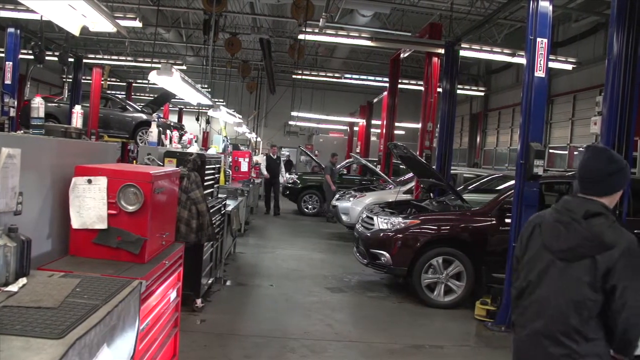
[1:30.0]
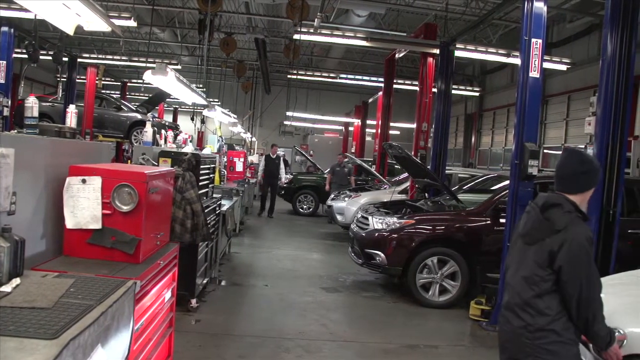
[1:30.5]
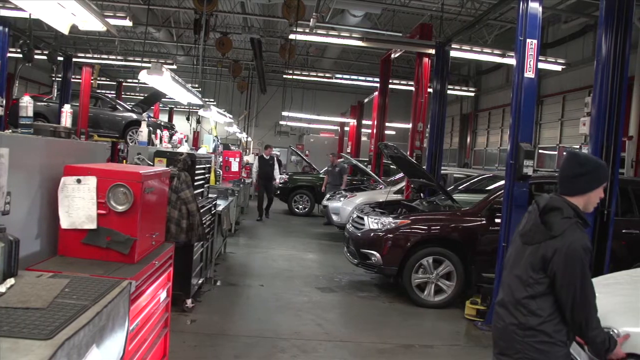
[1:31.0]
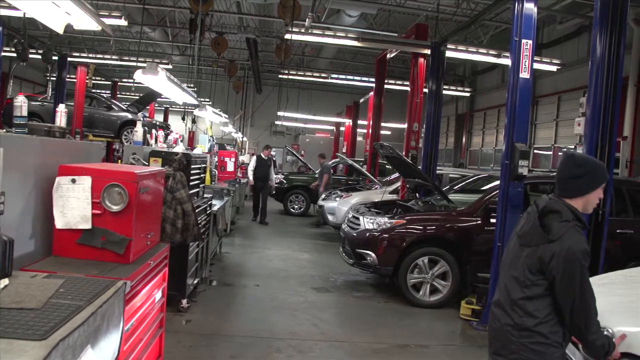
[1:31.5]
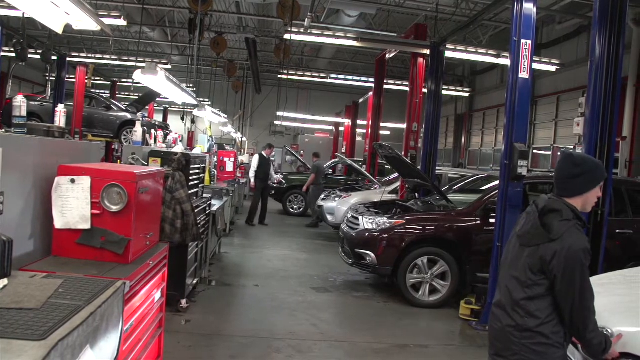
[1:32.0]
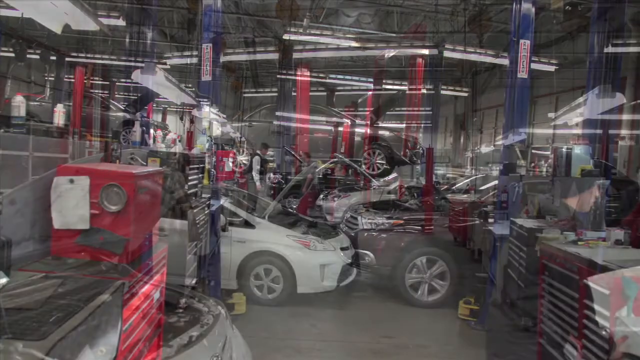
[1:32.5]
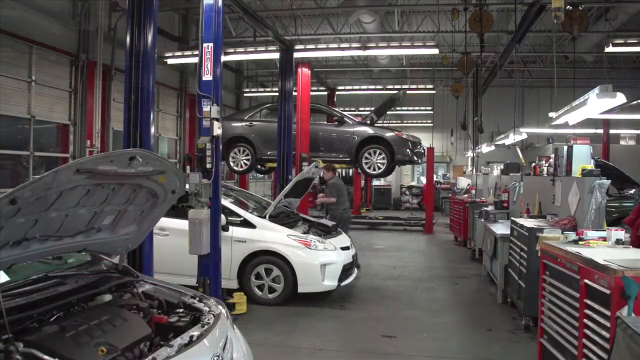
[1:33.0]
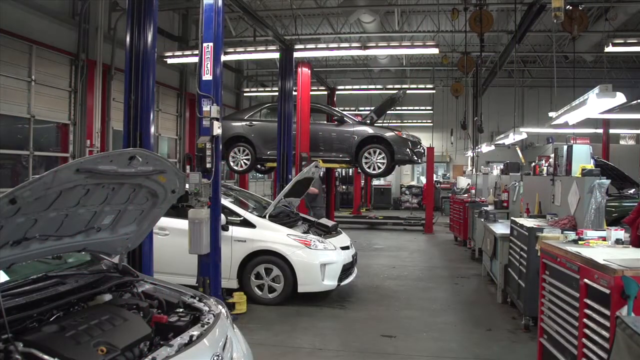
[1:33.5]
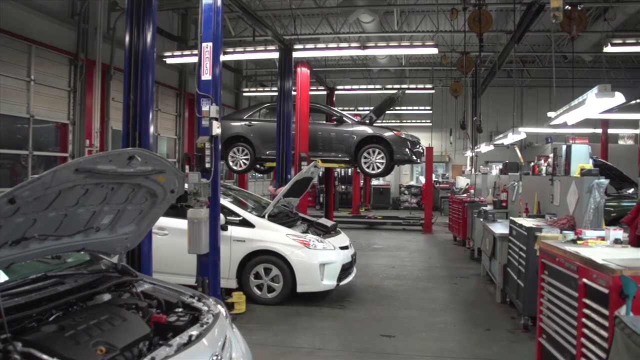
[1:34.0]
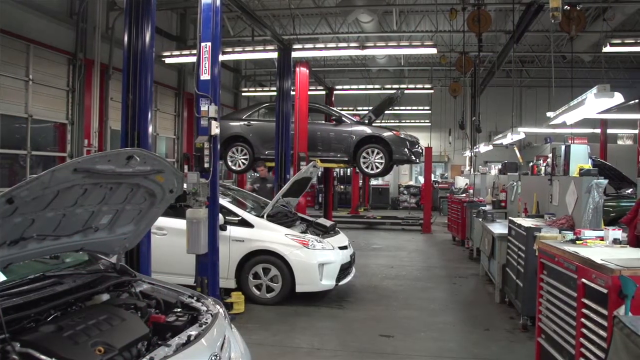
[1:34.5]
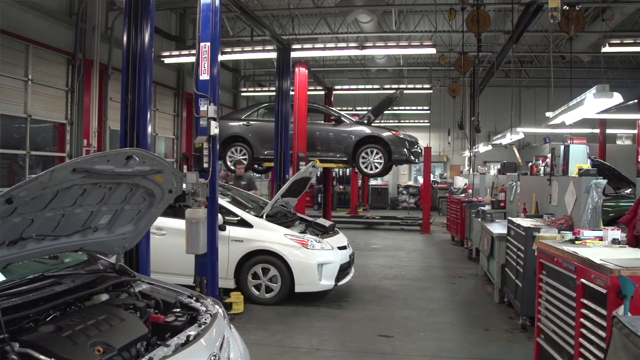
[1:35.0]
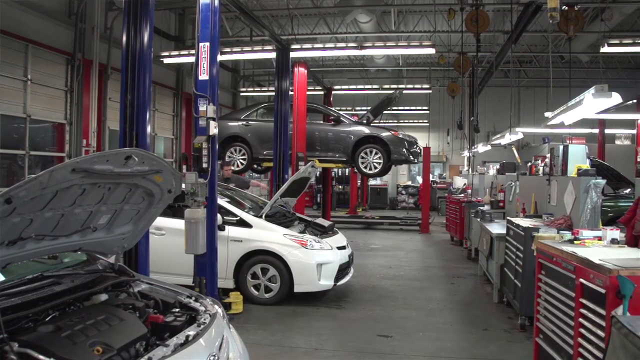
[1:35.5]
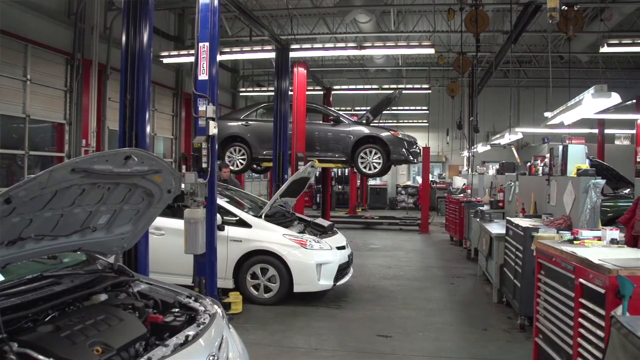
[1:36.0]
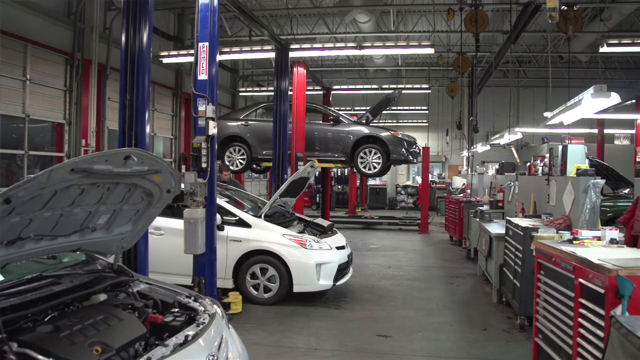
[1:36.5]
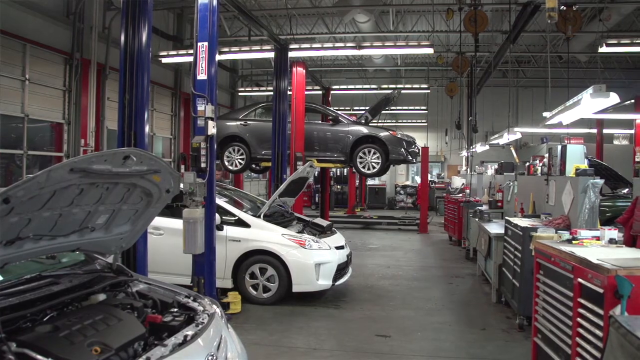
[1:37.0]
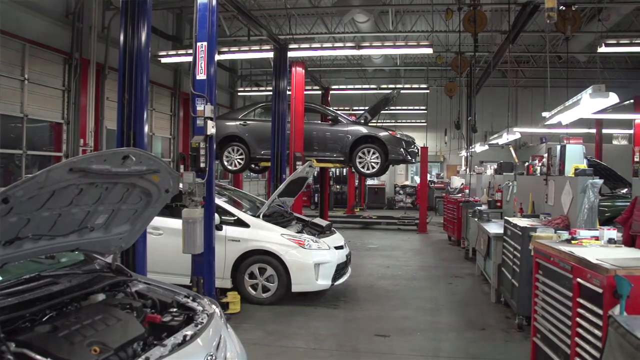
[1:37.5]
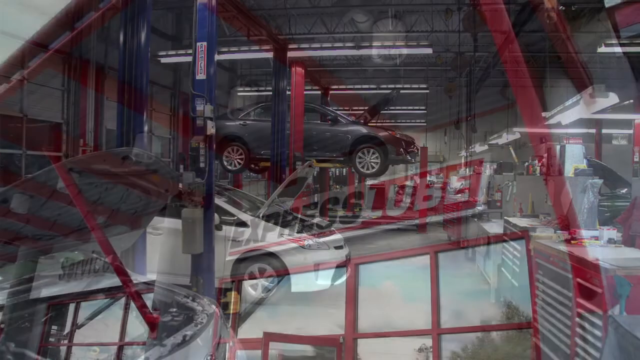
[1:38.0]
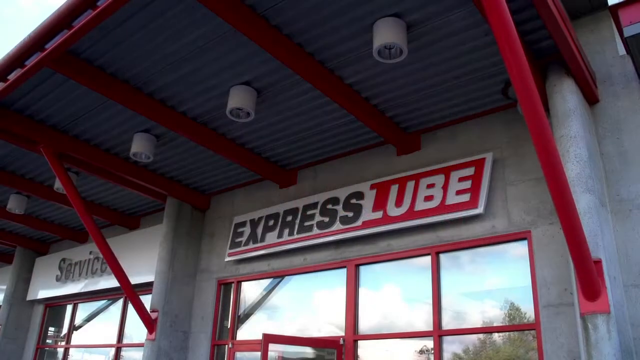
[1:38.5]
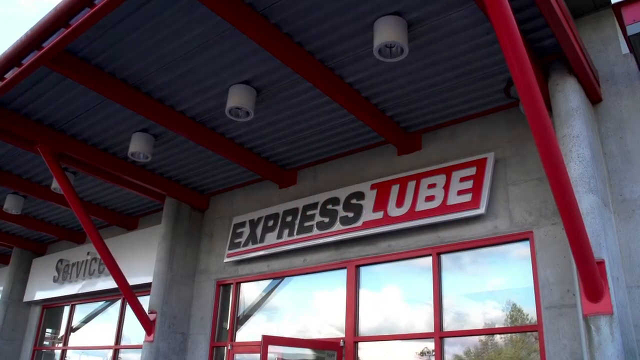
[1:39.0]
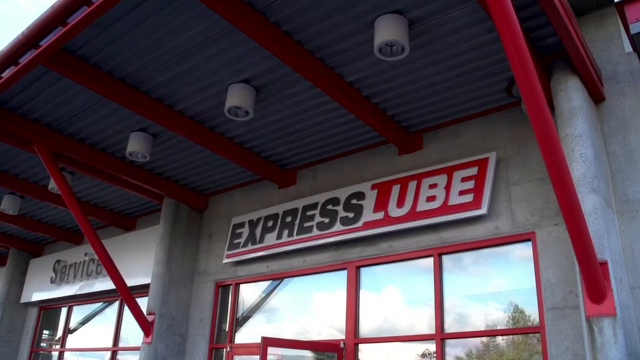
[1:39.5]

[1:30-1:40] The video continues in the car shop area, where Toyota vehicles are being worked on with their hoods open. On the left side, a car is elevated very high off the ground. The area is well lit, and someone on the right side is working on a vehicle. It then cuts to another shot of the work area, where four cars are being worked on and all three vehicles in the shot have their hoods open. There looks to be a white Prius with its hood open, and to the right a larger dark gray vehicle is elevated off the ground with its hood open. There are also tables in the area.